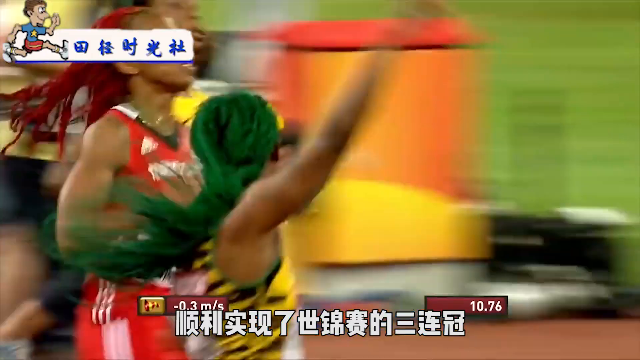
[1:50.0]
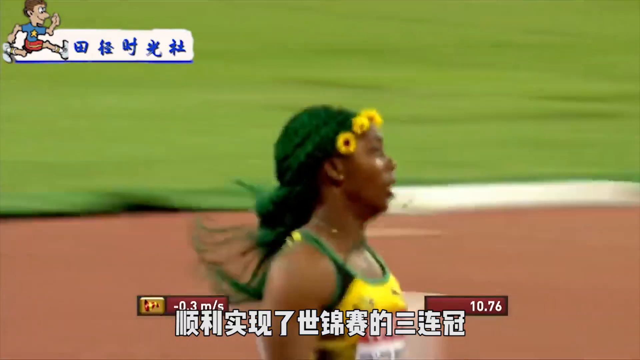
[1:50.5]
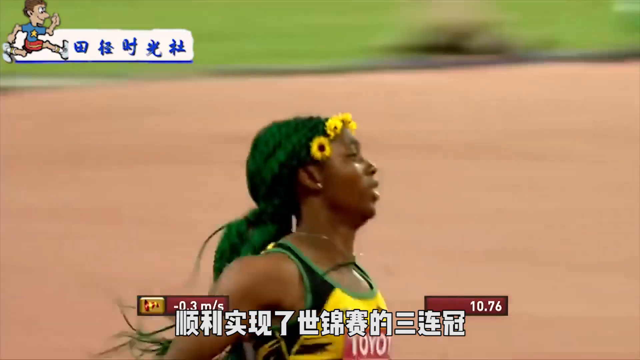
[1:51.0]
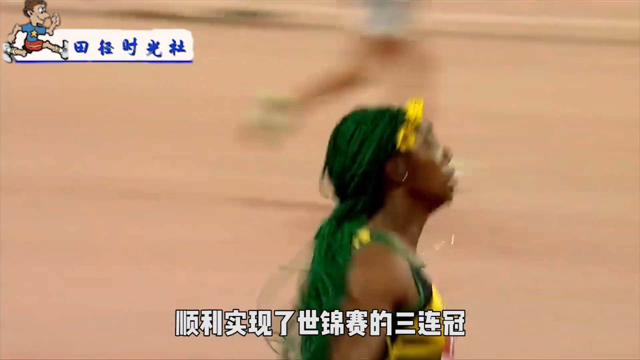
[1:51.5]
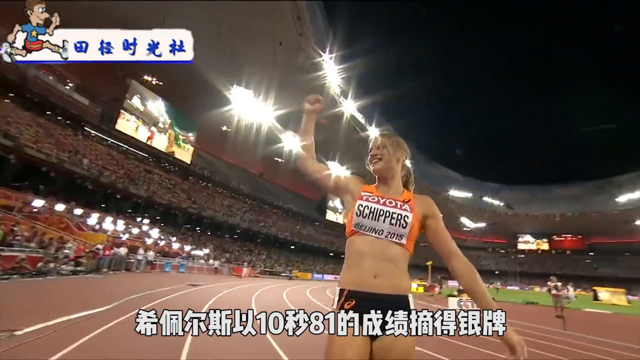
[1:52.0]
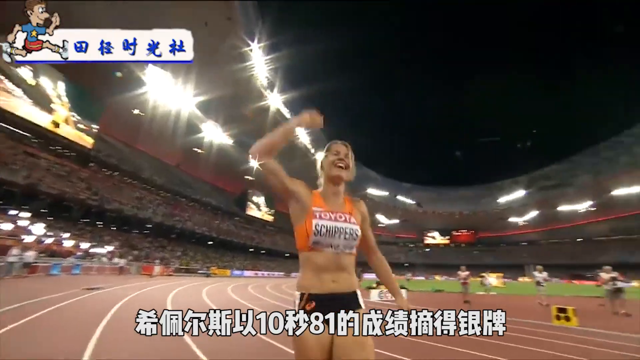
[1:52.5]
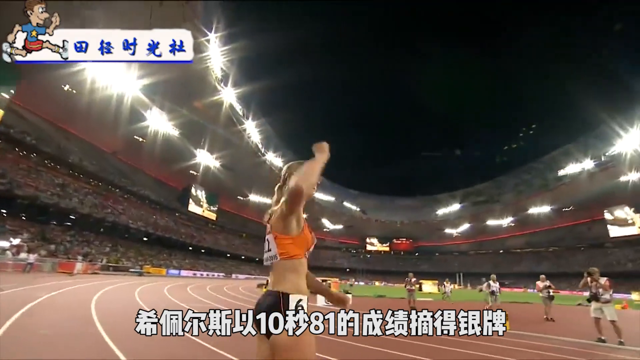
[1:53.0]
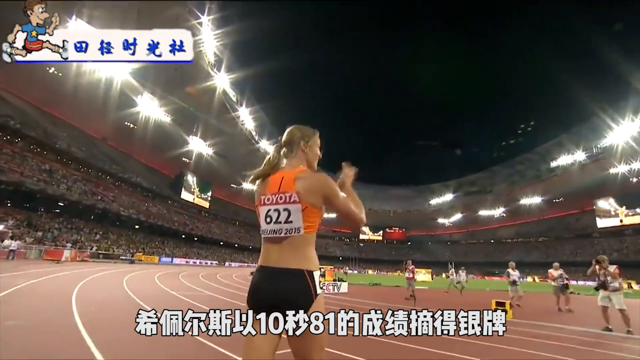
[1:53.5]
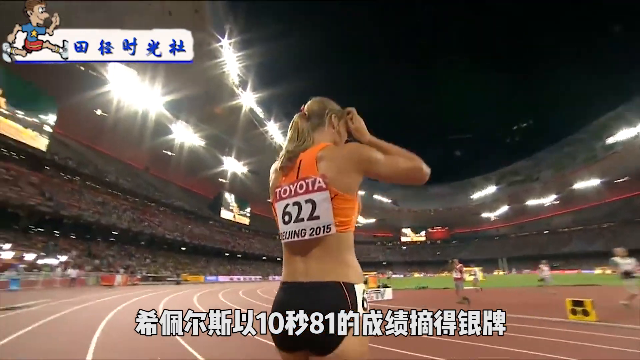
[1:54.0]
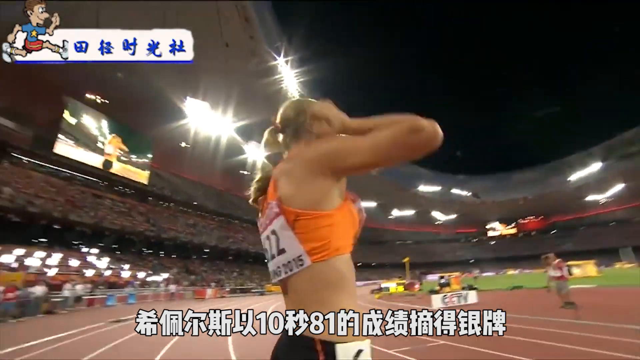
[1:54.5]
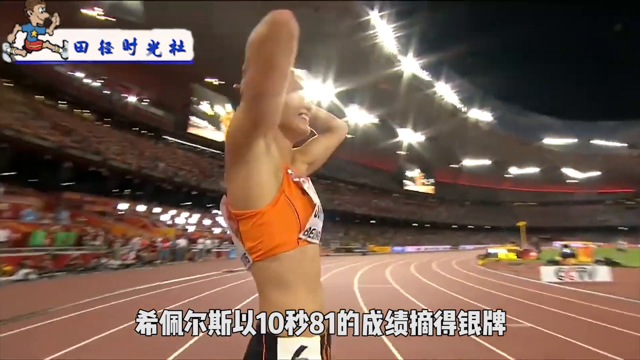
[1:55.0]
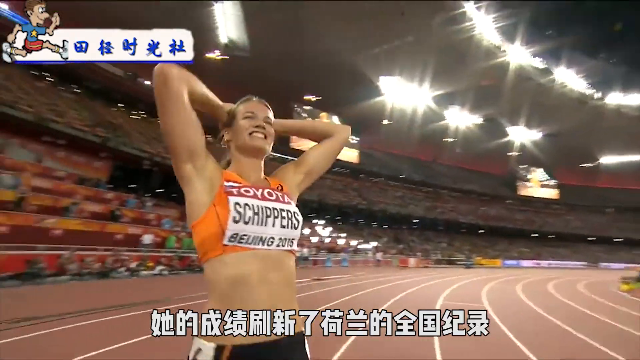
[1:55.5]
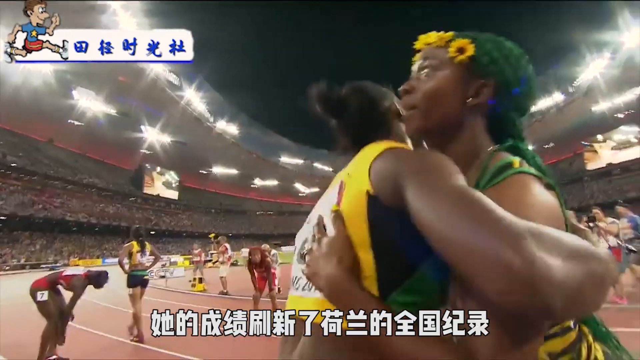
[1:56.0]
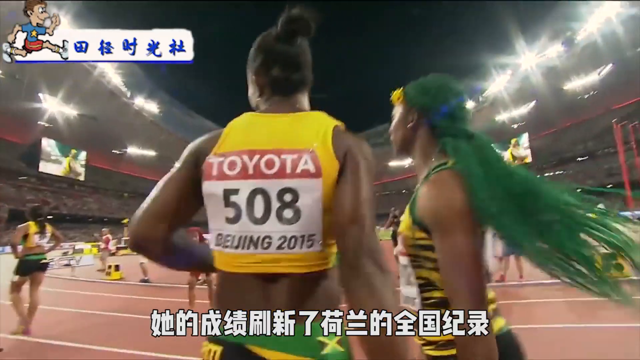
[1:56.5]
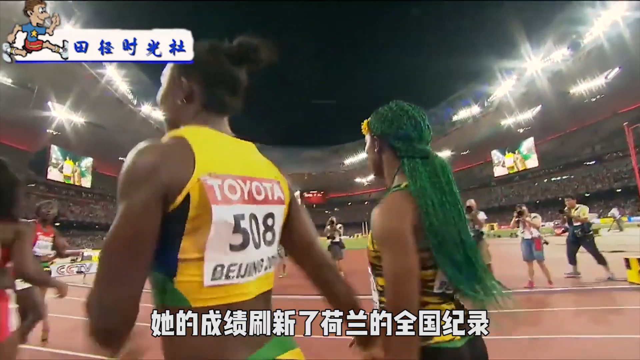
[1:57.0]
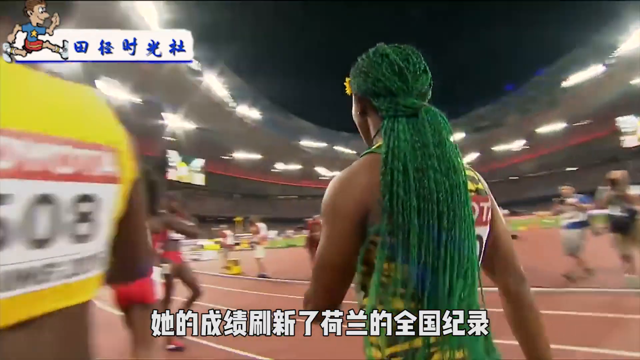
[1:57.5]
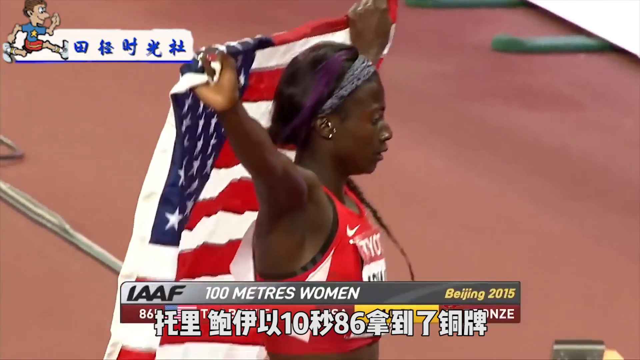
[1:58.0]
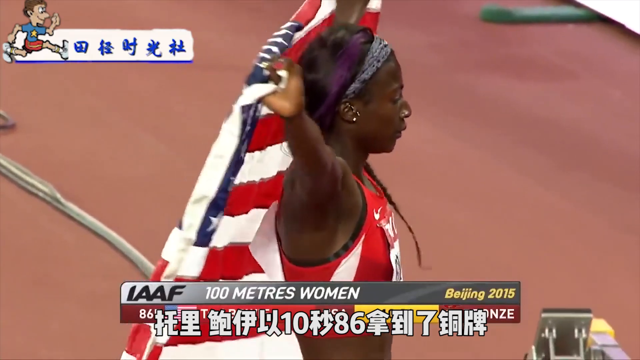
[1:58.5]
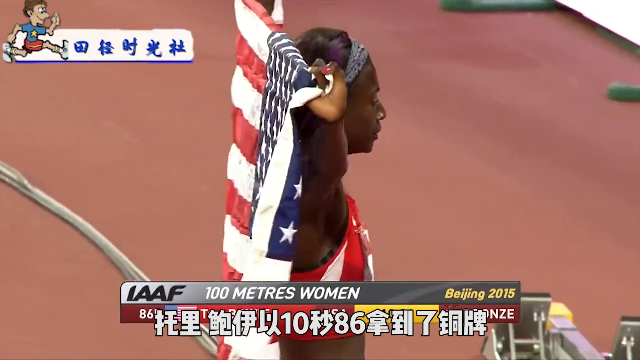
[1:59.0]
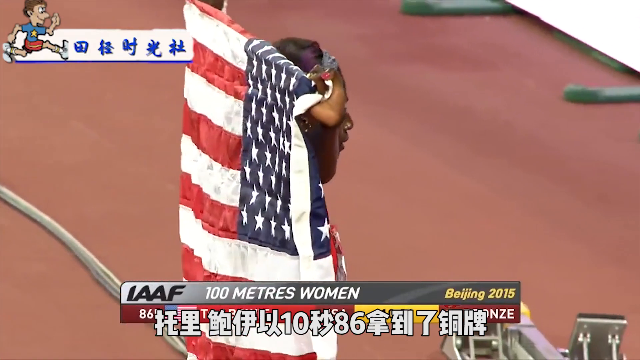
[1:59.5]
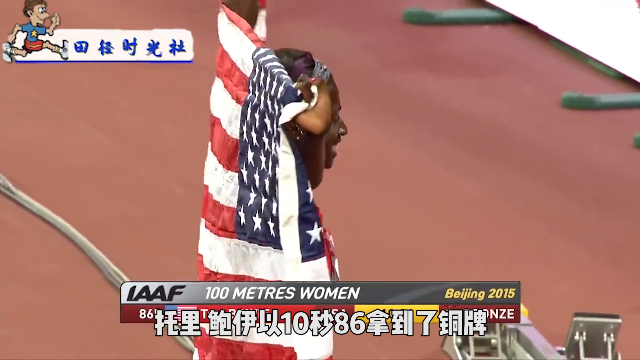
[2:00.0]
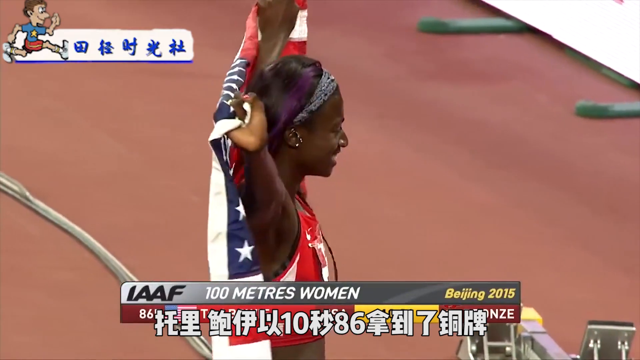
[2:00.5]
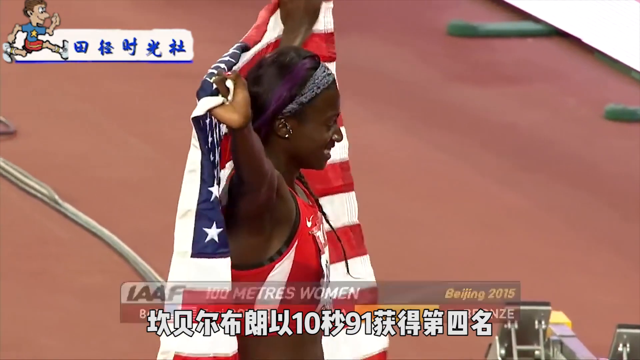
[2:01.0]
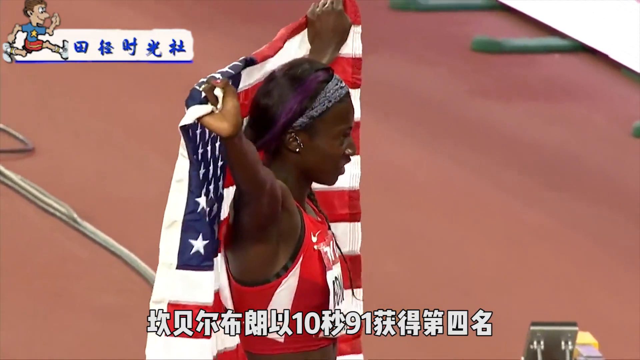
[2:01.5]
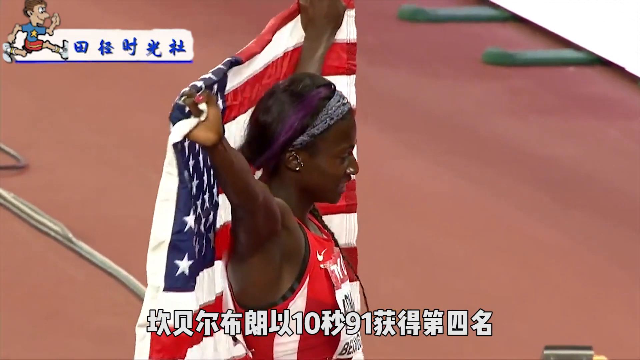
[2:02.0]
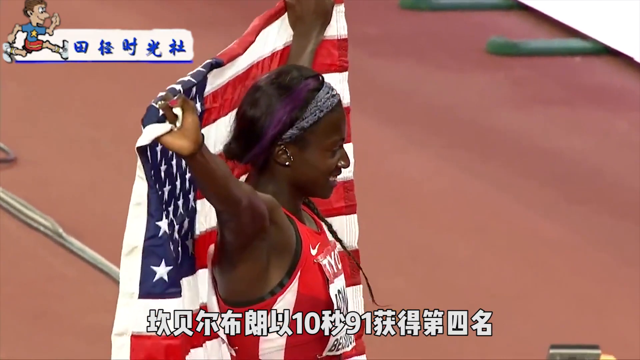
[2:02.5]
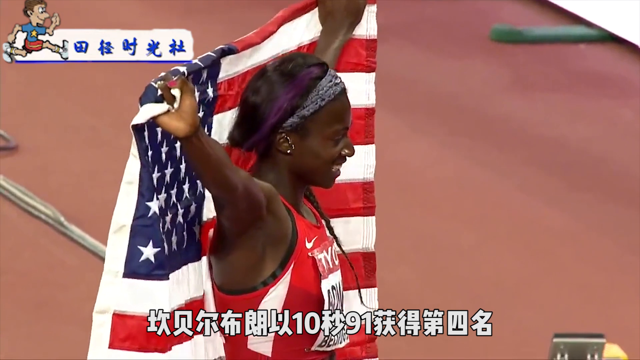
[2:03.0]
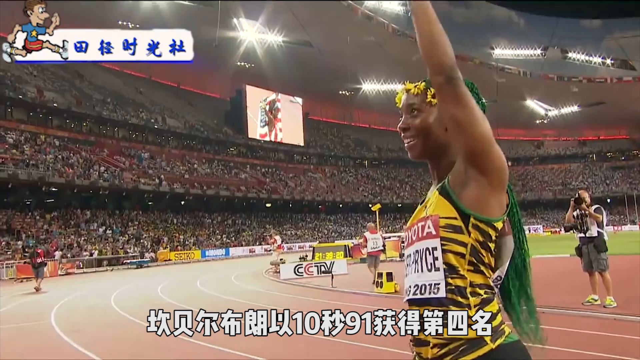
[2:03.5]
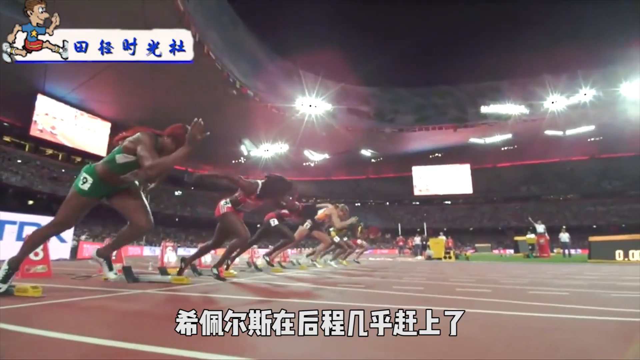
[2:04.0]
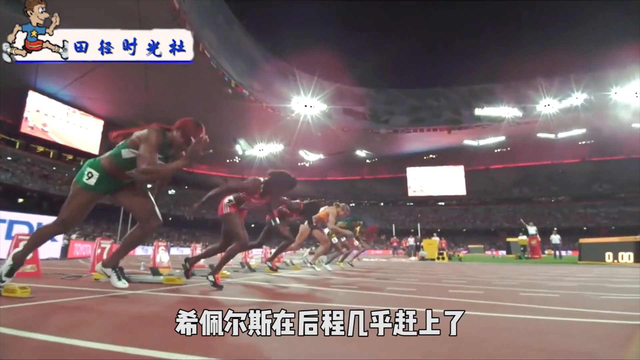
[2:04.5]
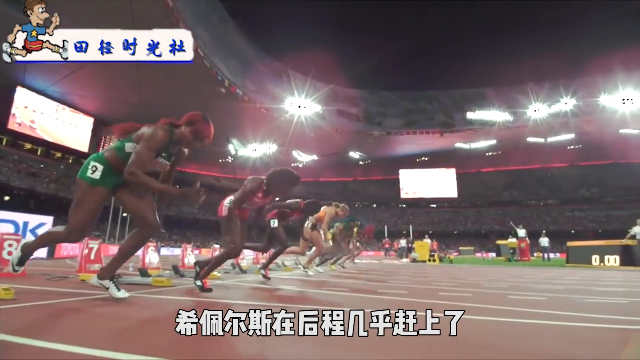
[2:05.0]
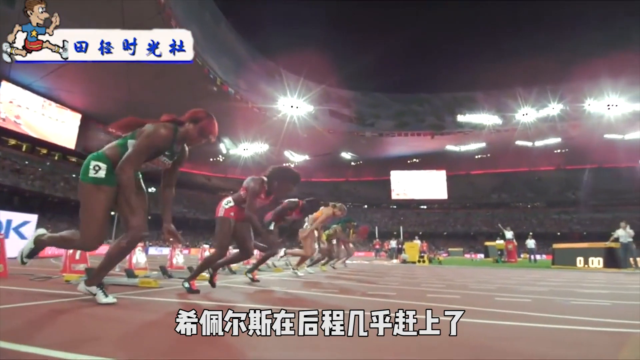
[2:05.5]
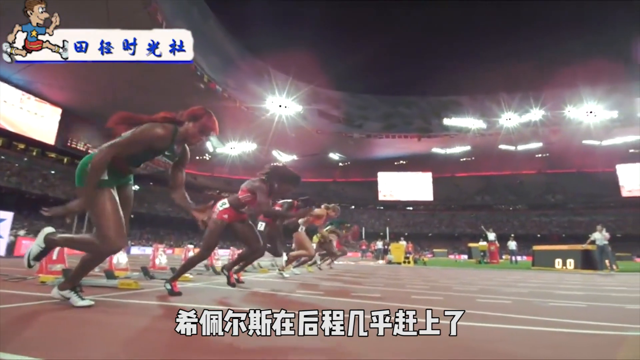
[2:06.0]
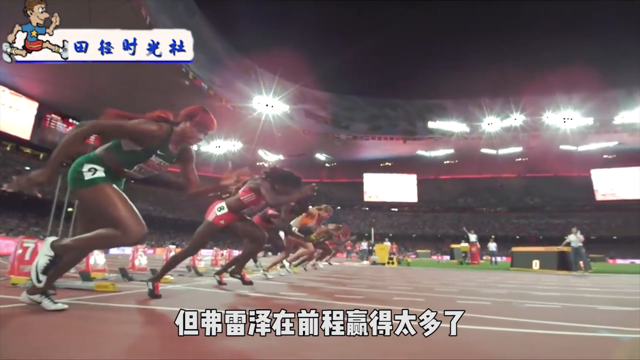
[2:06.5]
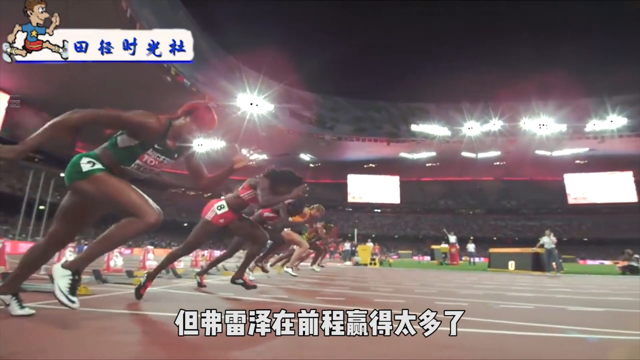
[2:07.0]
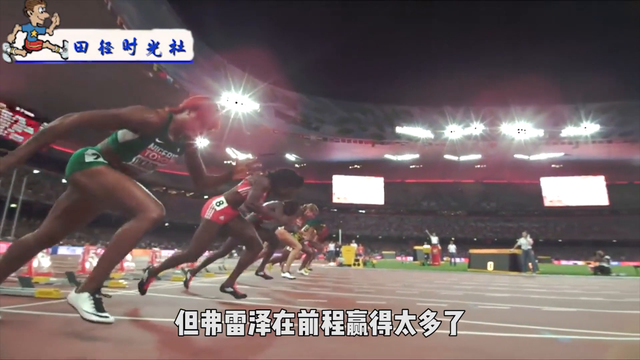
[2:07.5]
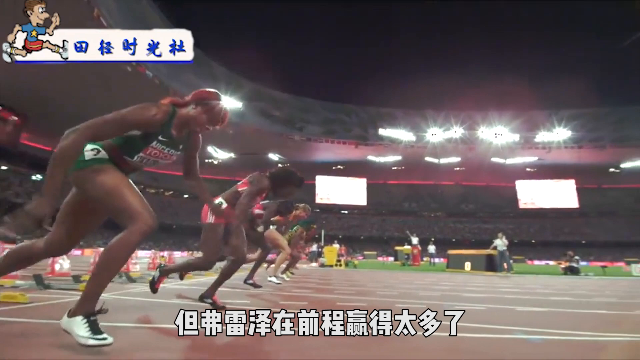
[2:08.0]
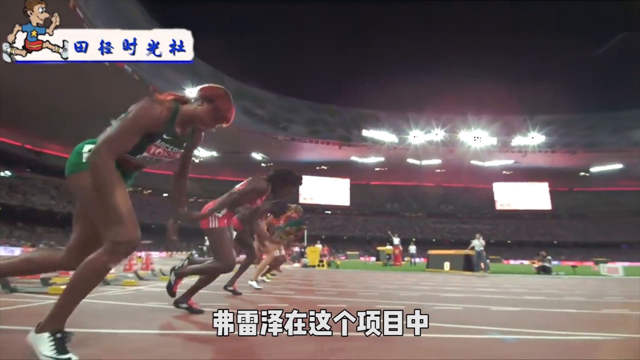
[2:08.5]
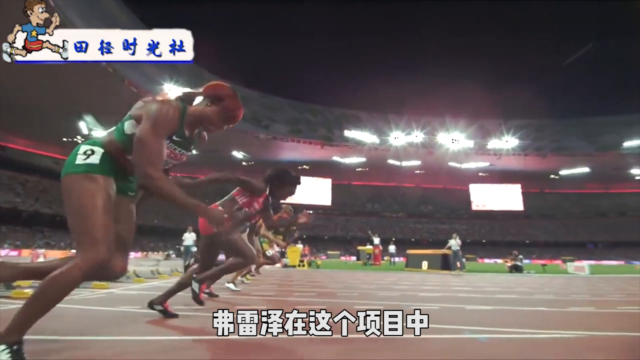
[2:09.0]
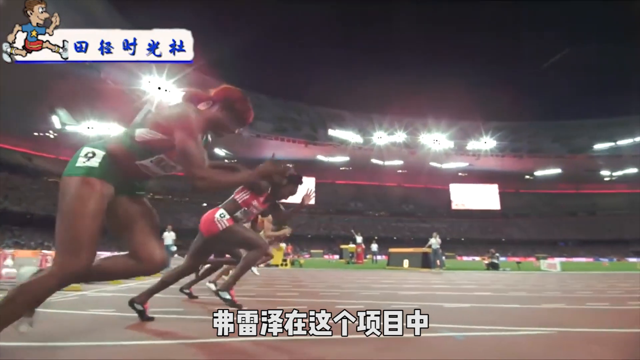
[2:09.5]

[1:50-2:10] After crossing the finish line, the competitors hug each other. The American competitor holds up a red flag draped behind her. A replay shows the race from the starting position to the finish, won by the competitor in the middle, whose very long hair is dyed emerald green and reaches halfway down her back. The dark-haired blonde woman, who probably took second place, looks very happy and pumps her fist into the air; the plate on her back reads "622" along with "Beijing 2015", apparently her formal competitor number.